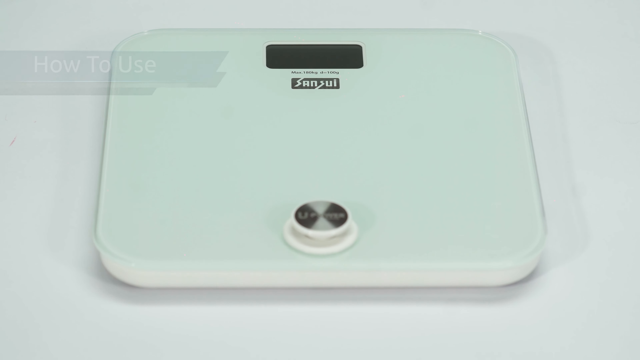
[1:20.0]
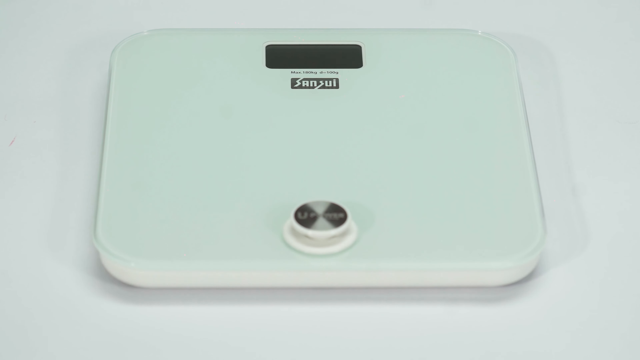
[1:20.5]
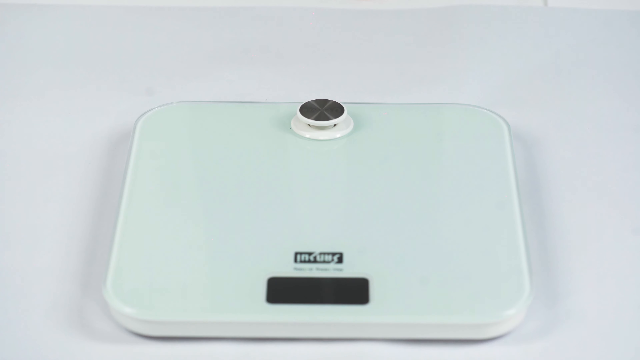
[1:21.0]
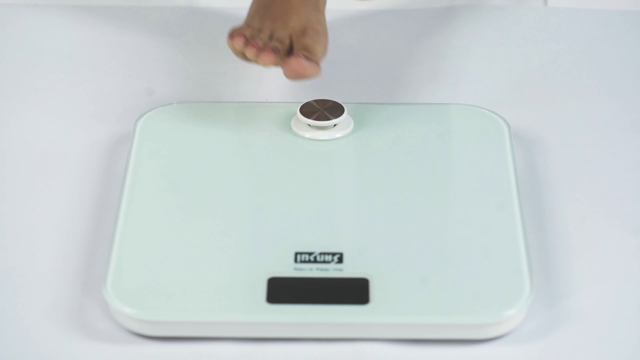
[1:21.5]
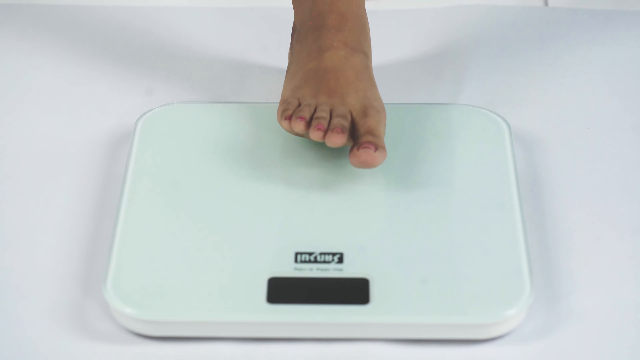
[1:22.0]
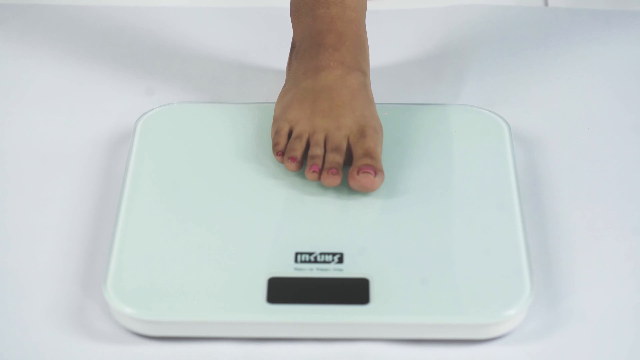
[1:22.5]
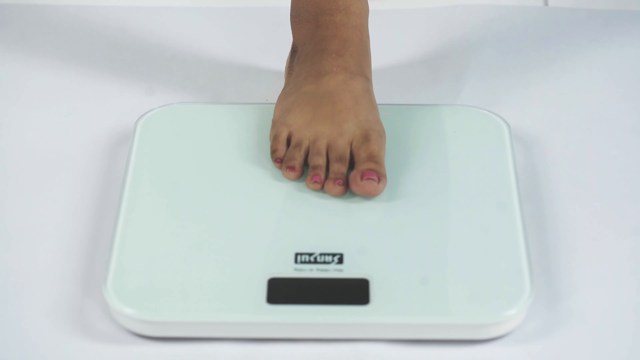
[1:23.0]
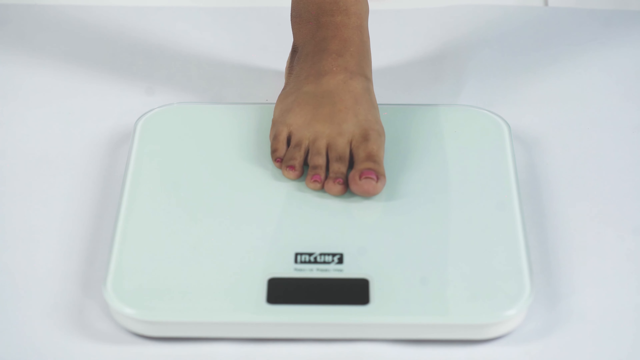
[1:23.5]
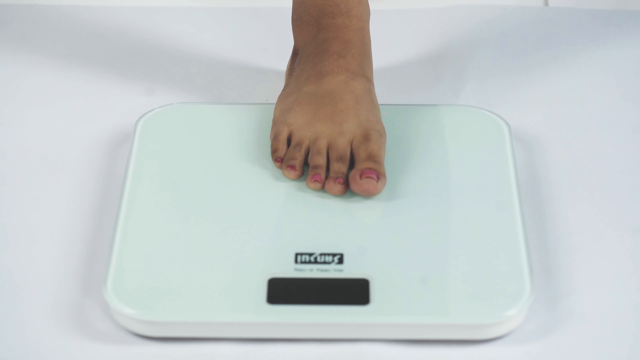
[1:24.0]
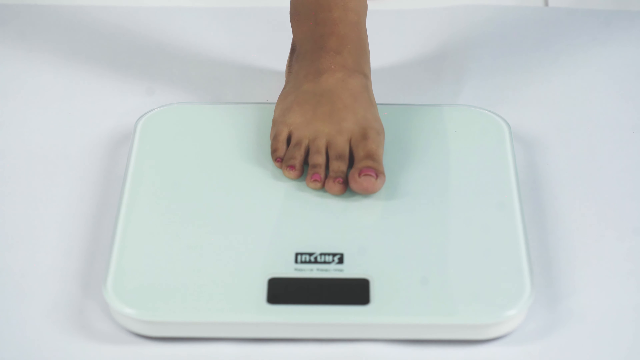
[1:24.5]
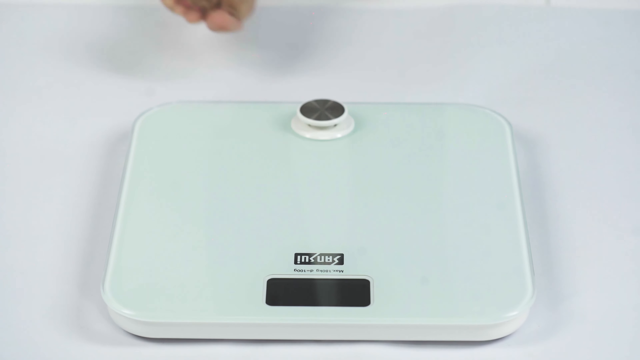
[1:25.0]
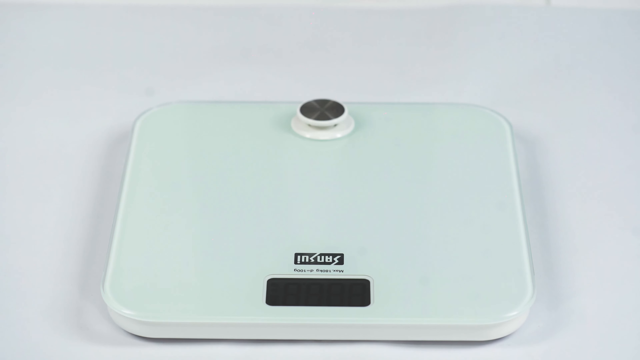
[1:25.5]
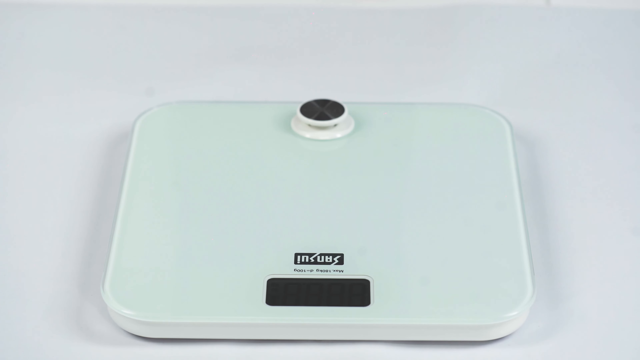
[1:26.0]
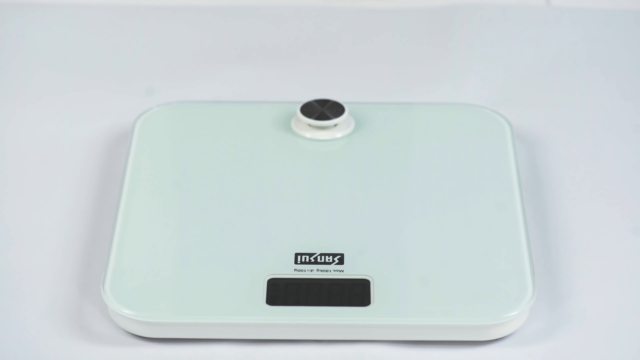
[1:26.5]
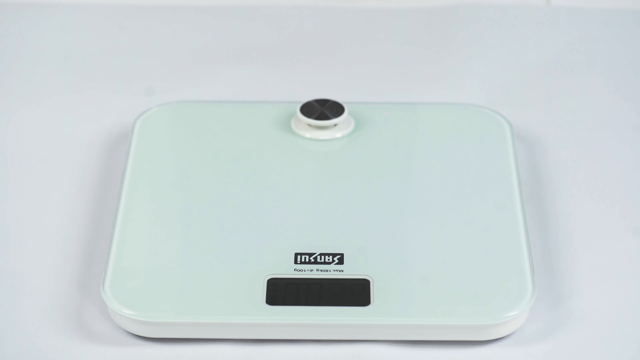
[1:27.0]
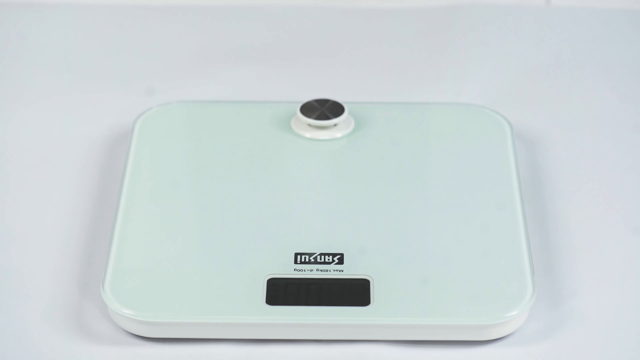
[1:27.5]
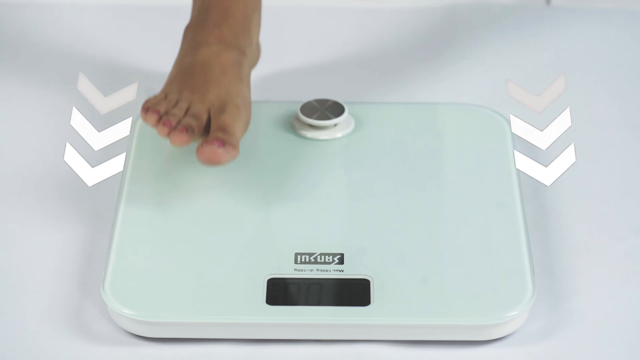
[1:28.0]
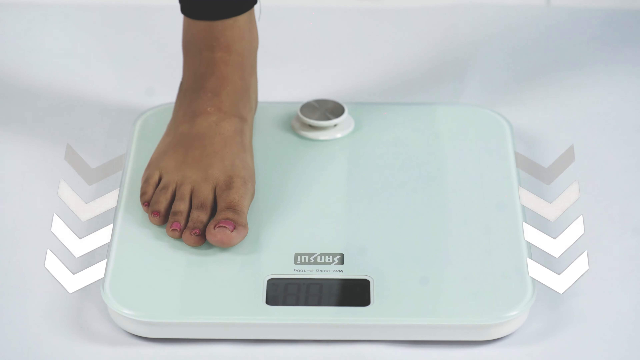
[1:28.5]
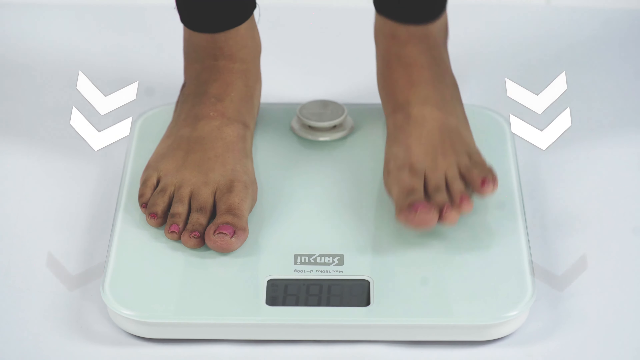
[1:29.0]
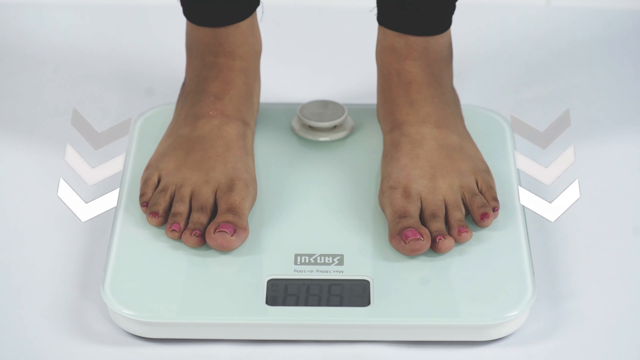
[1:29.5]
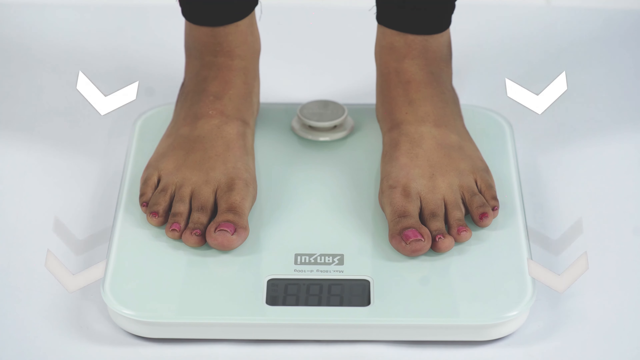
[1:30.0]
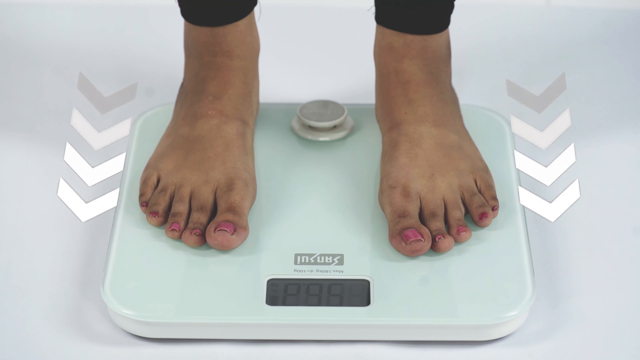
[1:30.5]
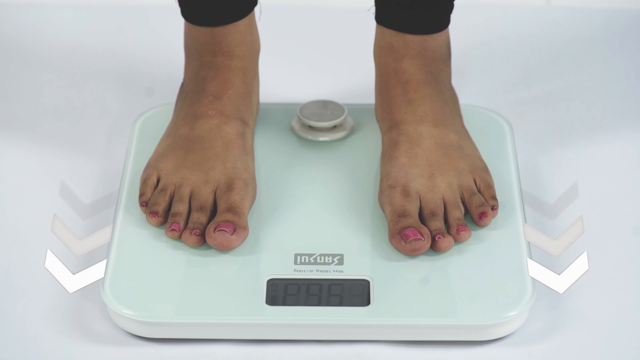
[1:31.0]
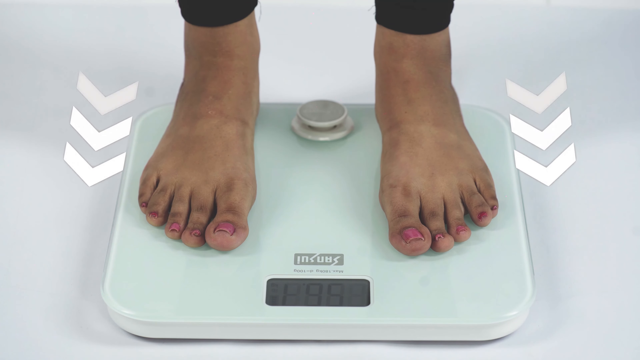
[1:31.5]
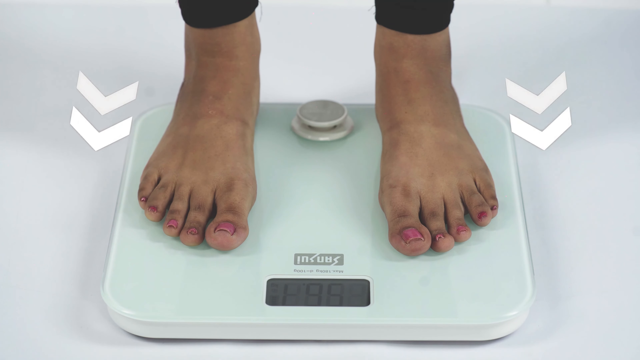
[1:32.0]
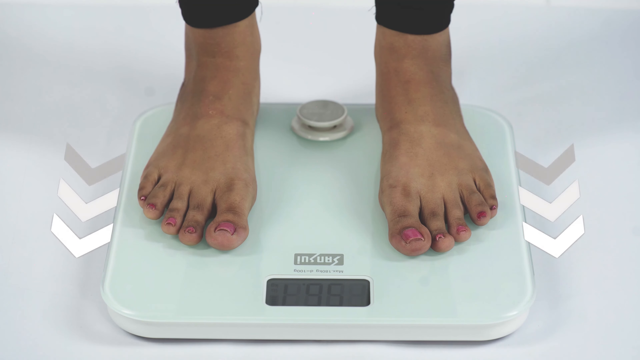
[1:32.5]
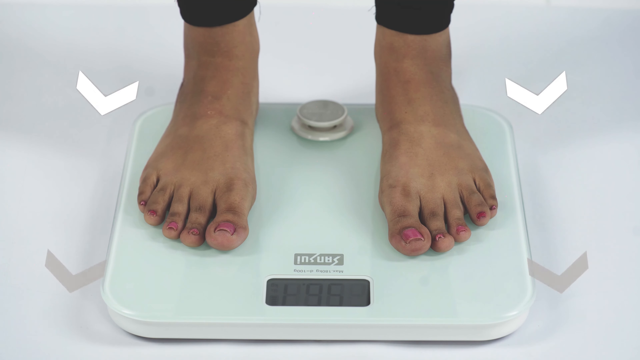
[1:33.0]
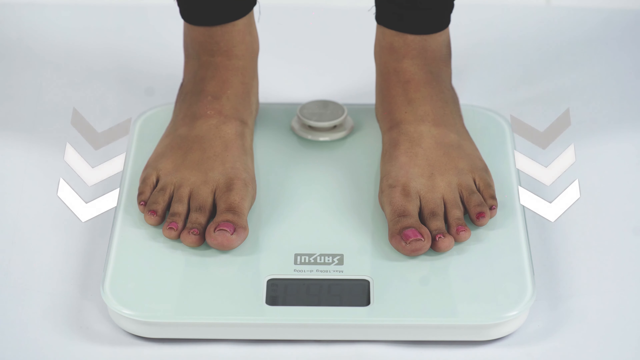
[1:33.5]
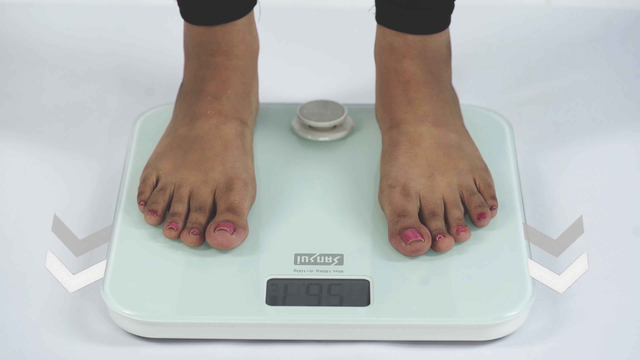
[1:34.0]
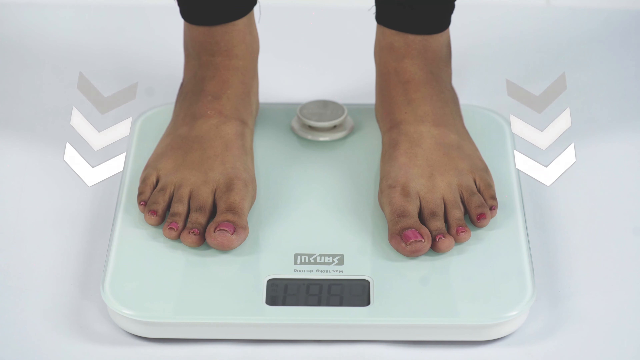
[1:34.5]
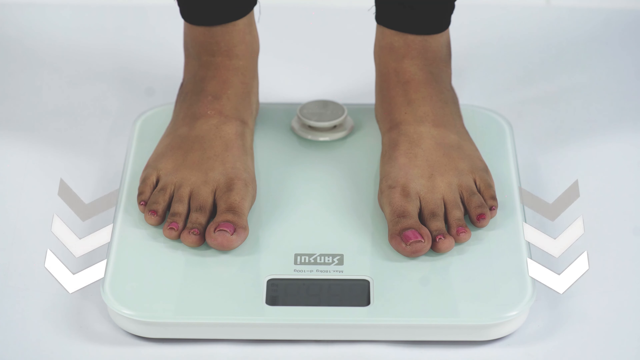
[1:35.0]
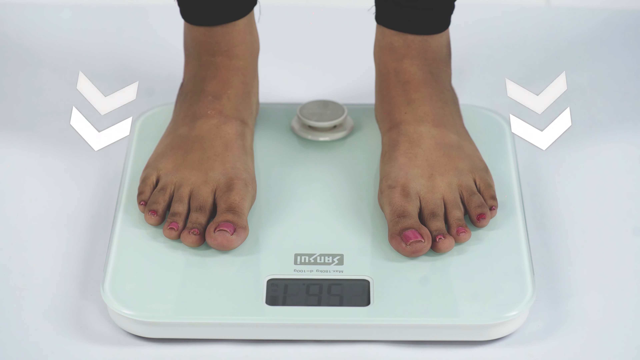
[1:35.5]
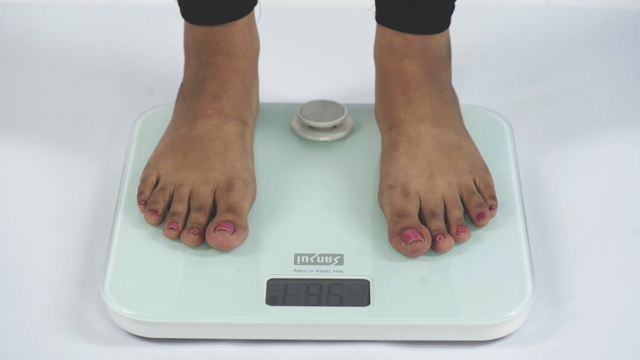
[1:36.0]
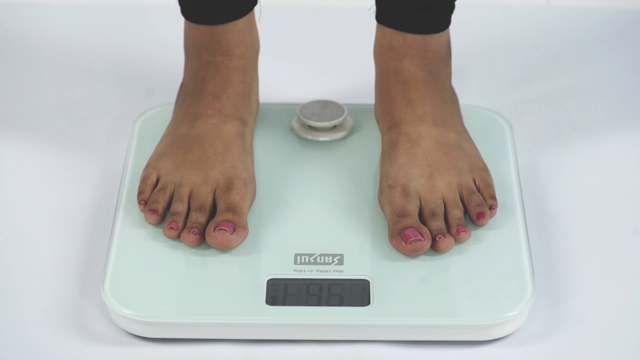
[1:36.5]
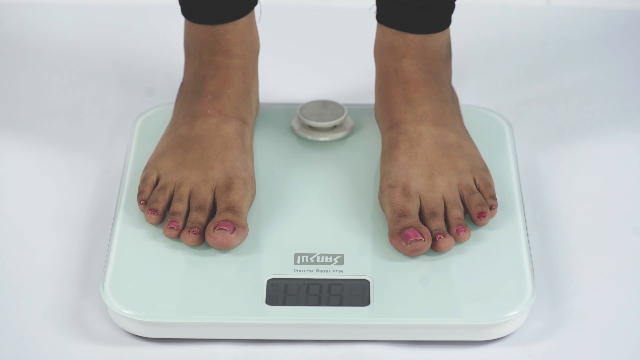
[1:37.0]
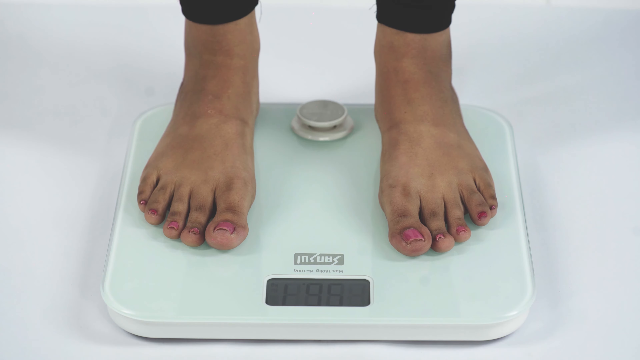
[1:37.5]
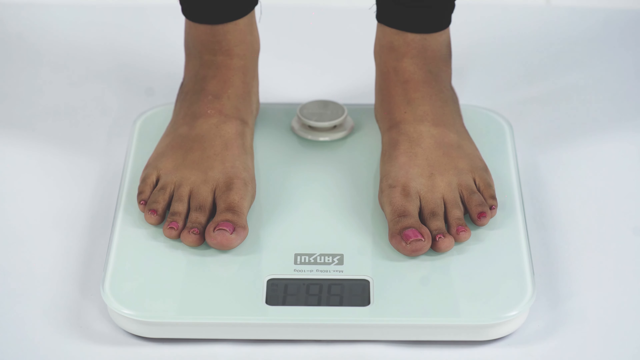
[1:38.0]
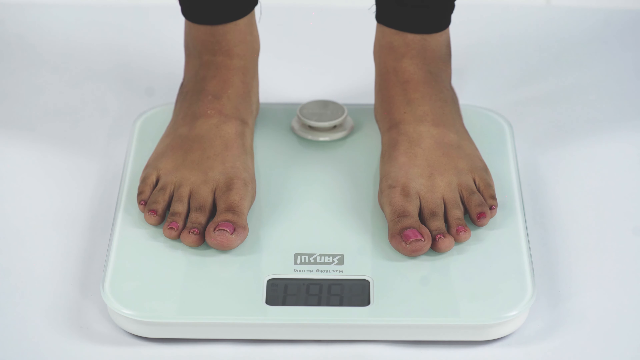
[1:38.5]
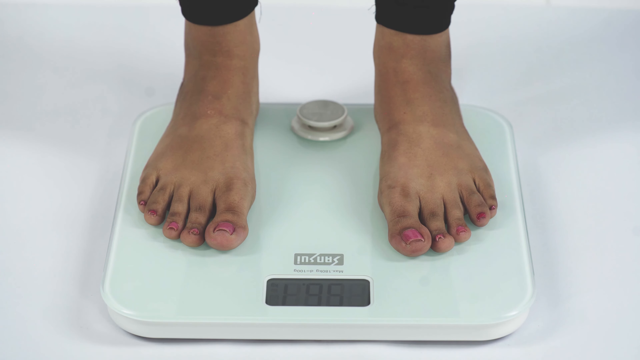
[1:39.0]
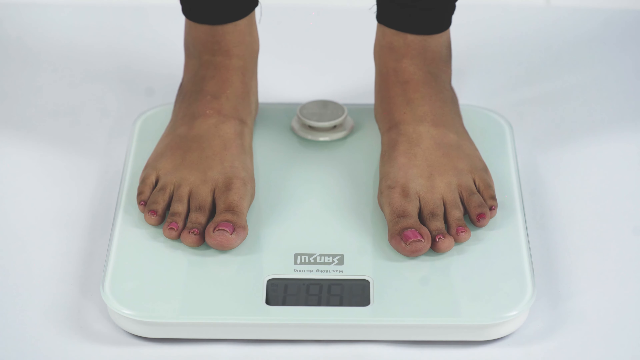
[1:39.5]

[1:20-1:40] White scales with "Sansui" on them are in front of the camera. A woman who appears to be wearing black leggings stands on the scales; the very close-up image shows only the bottom of the leggings and all of her feet, and she has pink nail varnish on her toes. She puts one foot on the scale, which appears to activate it, and then puts both feet on the scale, appearing to weigh herself. This seems to show how to use the scales. There appears to be a button at the bottom of the scales, which she presses with her right foot to start them. There are also some arrows that appear to show which way to stand on the scales when activating them.